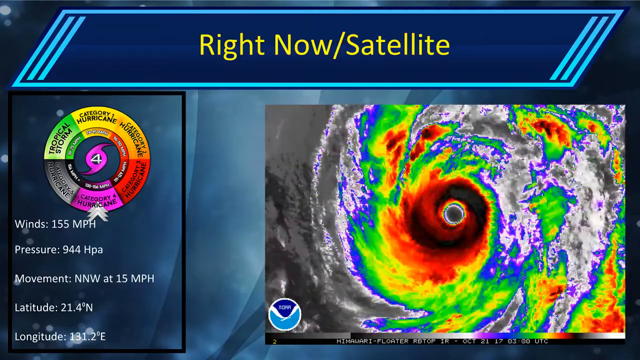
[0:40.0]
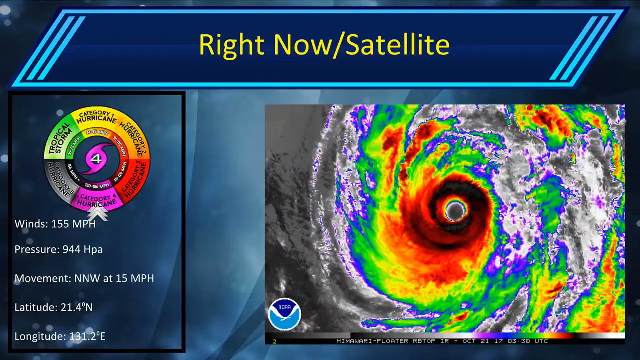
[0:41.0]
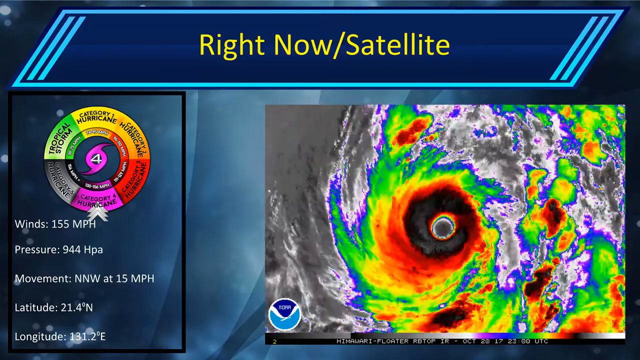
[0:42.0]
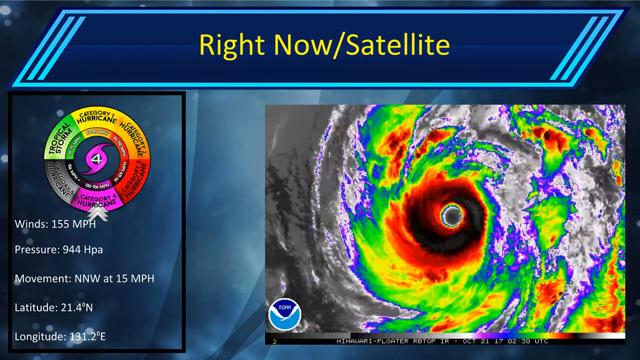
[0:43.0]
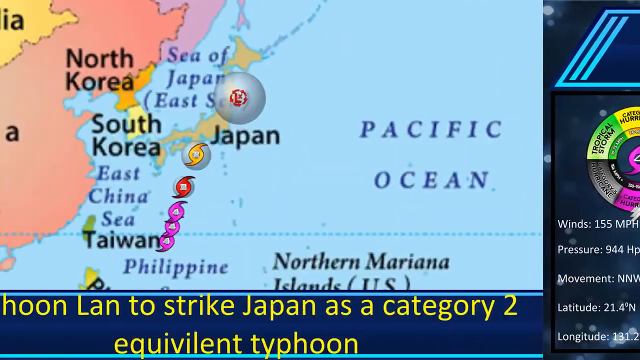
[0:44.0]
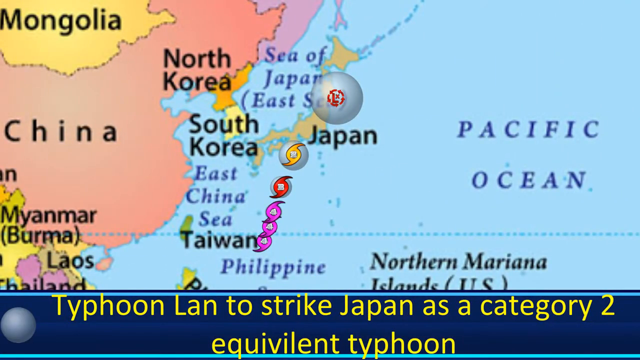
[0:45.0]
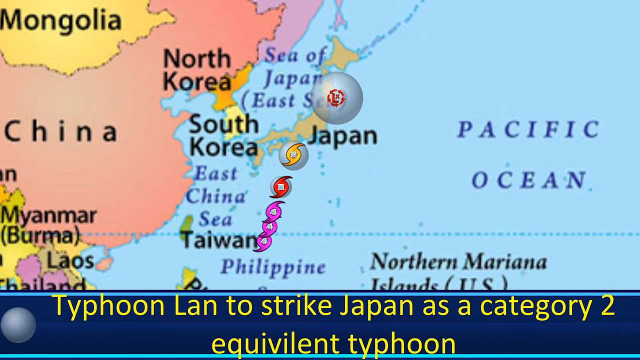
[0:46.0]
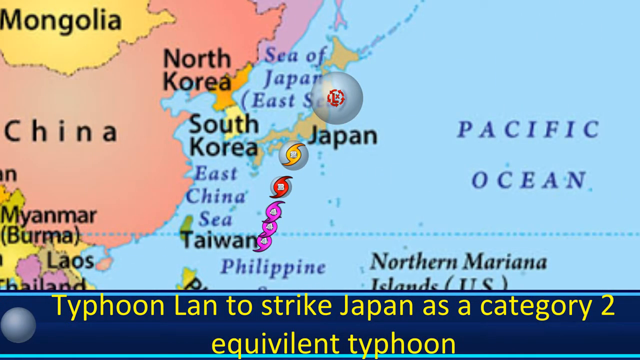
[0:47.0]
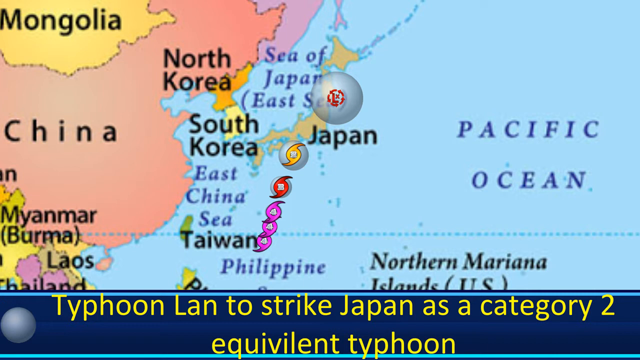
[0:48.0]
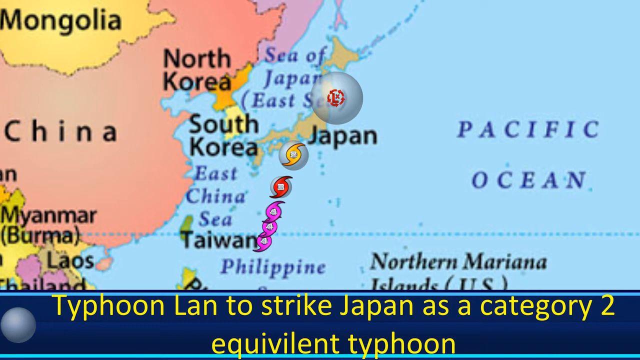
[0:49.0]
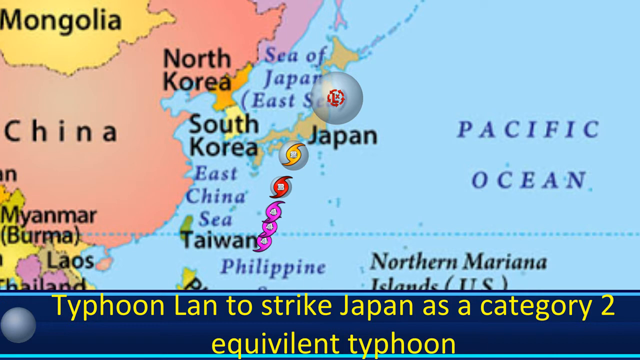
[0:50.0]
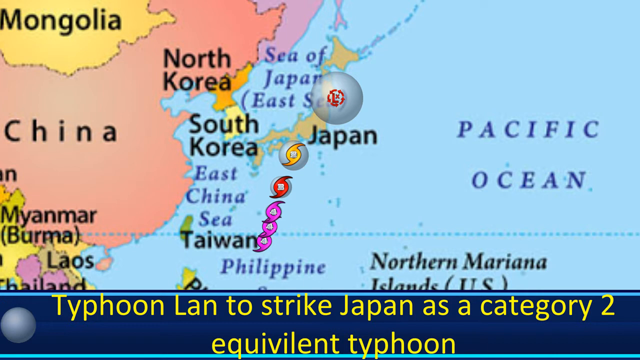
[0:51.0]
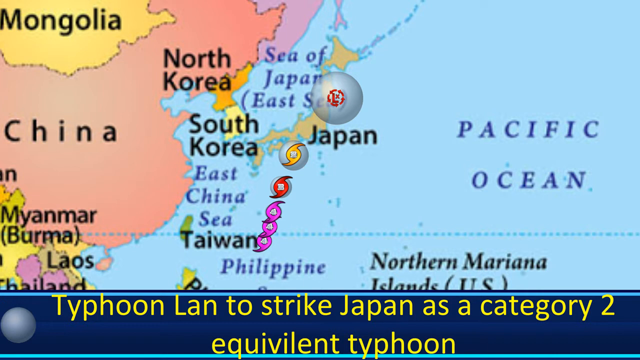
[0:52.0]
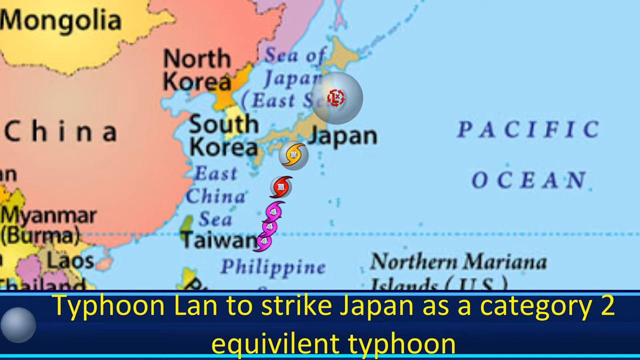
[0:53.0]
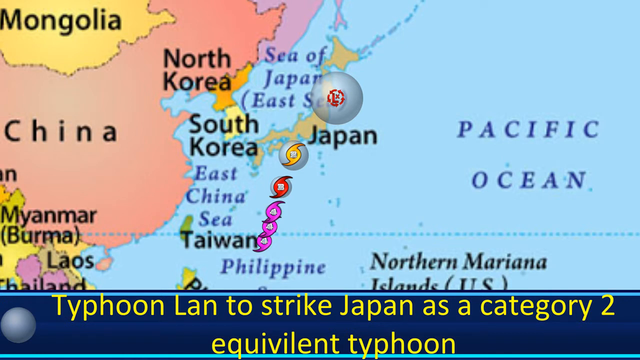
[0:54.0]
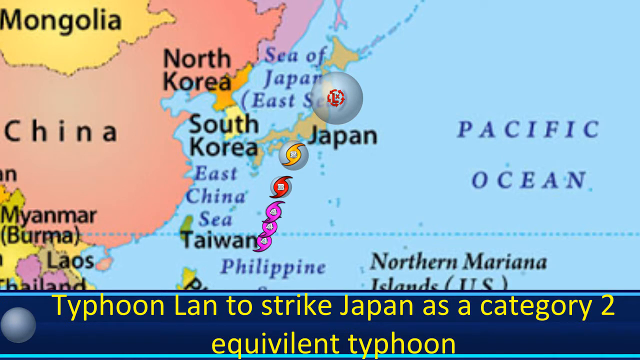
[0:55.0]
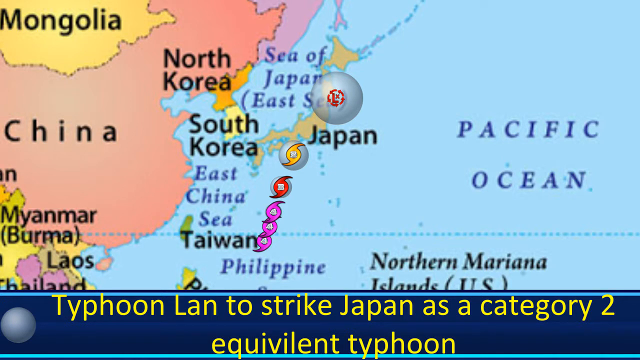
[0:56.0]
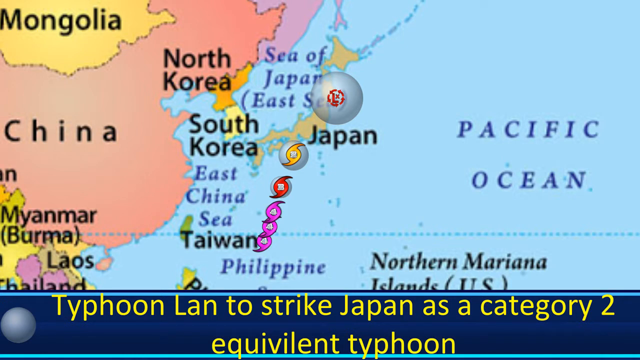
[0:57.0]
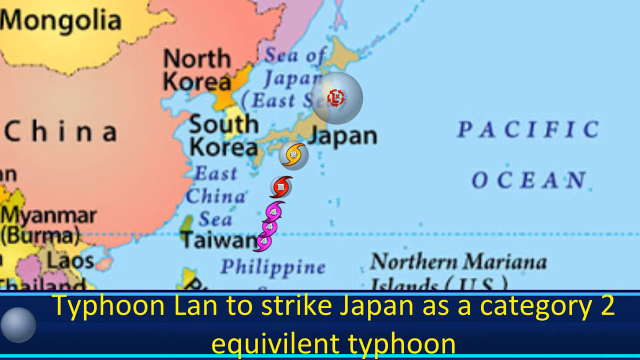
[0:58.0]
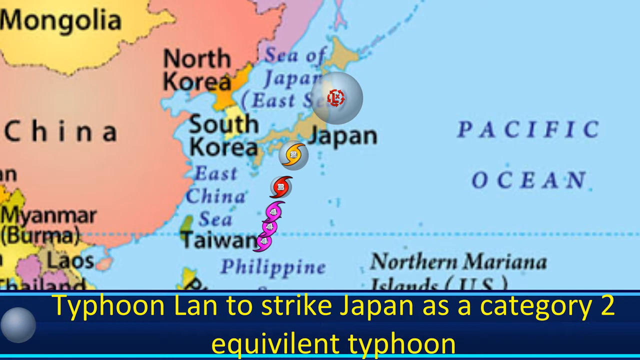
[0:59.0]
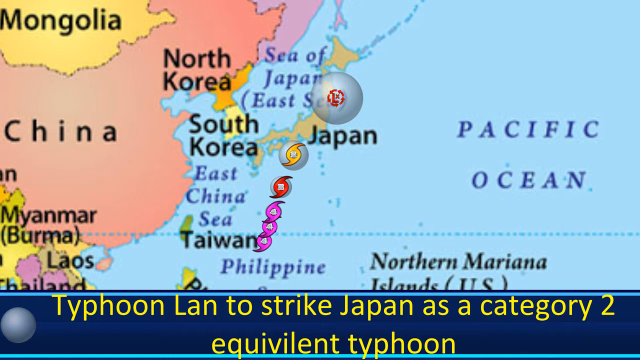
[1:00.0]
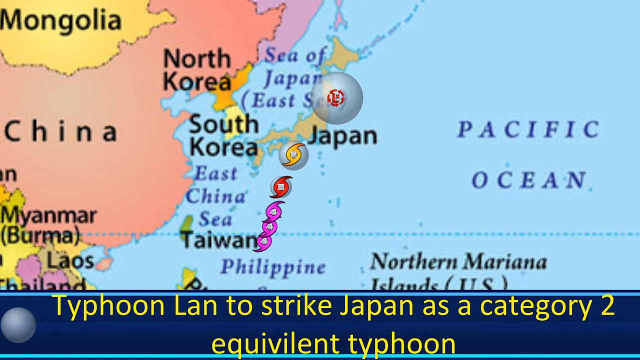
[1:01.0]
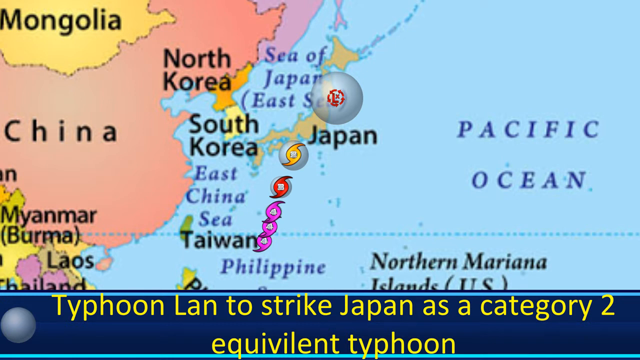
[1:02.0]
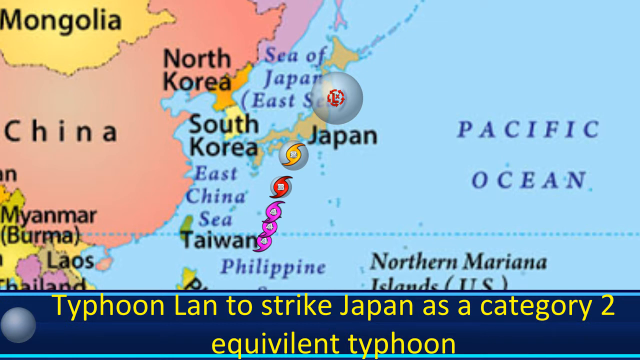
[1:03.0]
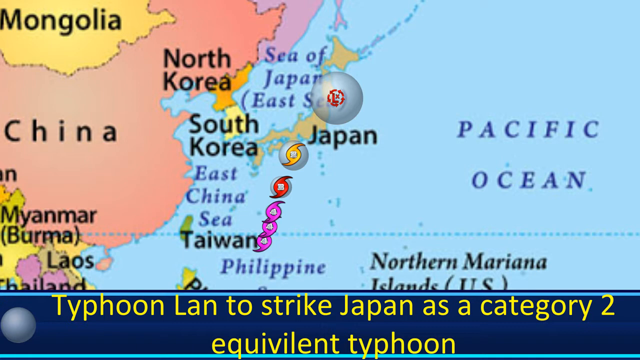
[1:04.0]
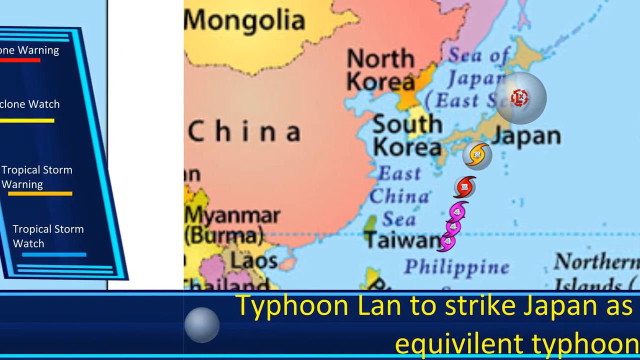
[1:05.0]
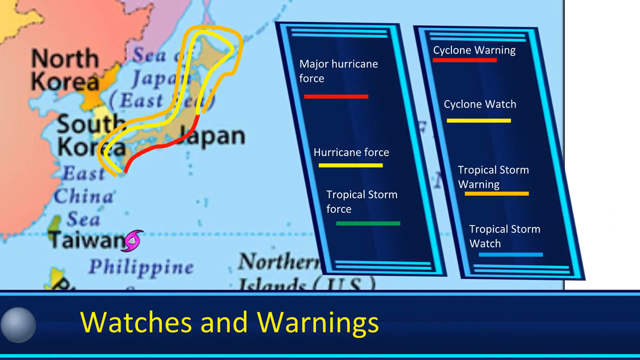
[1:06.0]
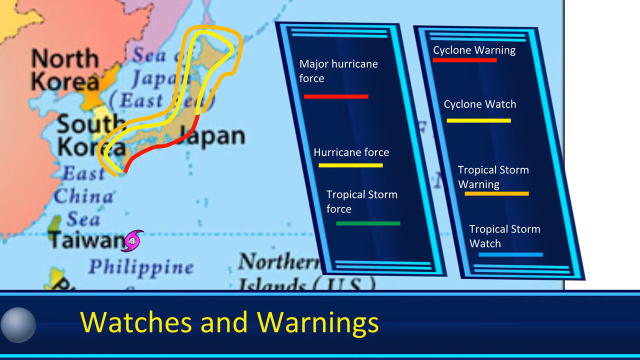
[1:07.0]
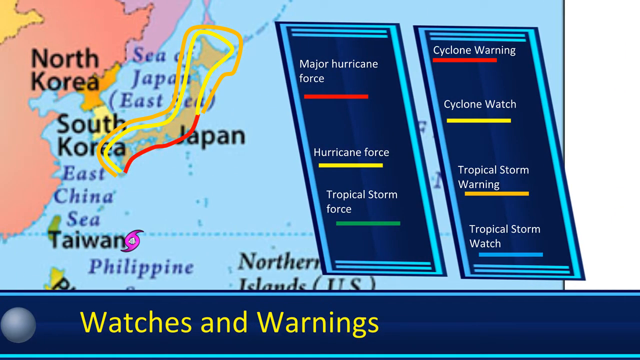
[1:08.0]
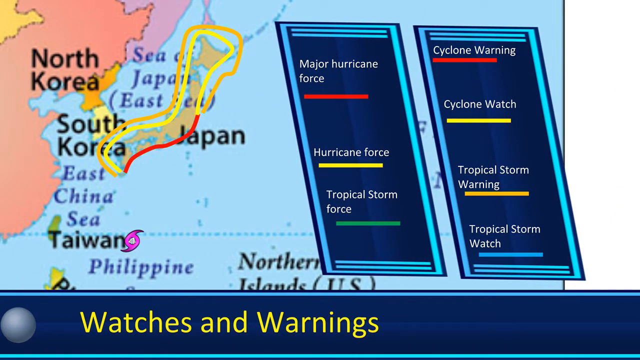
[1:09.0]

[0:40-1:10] The right now satellite screen continues, with its graphics showing the current category four hurricane and its movement. A few seconds in, the screen slides to the right to a map near Japan, showing China and other countries in the area, including the Pacific Ocean. At the bottom of the screen is a dark blue bar with yellow text that reads "typhoon land to strike Japan as a category 2 equivalent typhoon". Various symbols run along the coast of Japan down to Taiwan, apparently indicating where the typhoon is heading to land. A row of number 4s is lined up at the bottom, and above them are more symbols: one red, one yellow, and one with an L in a red circle. The symbols go up toward Japan and get bigger as they get closer to it. The screen then slides to the right to another image near Japan, outlining the area and showing information about watches and warnings, with the bottom tab reading "watches and warnings" in yellow.